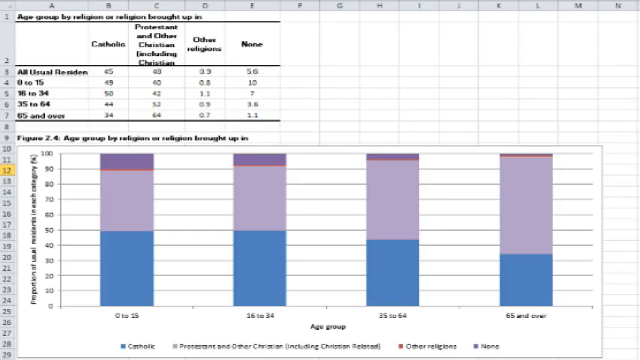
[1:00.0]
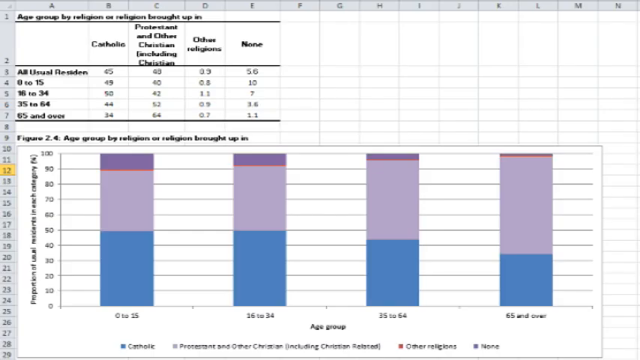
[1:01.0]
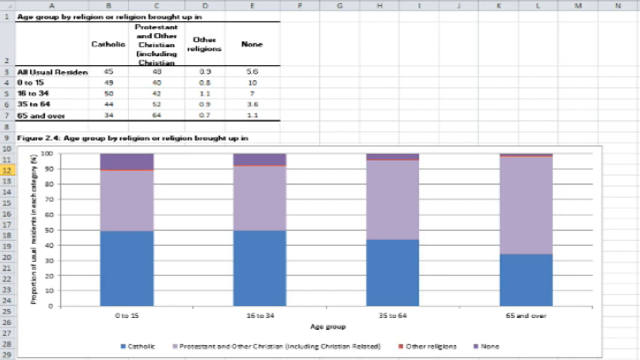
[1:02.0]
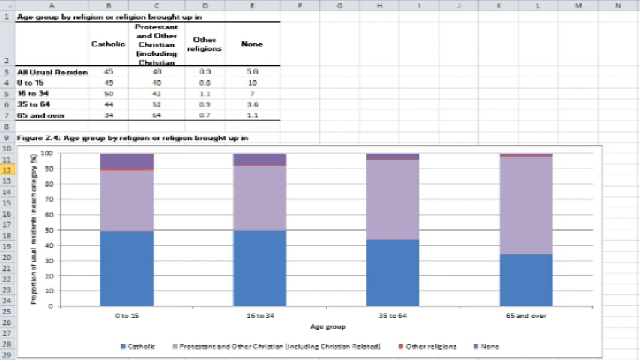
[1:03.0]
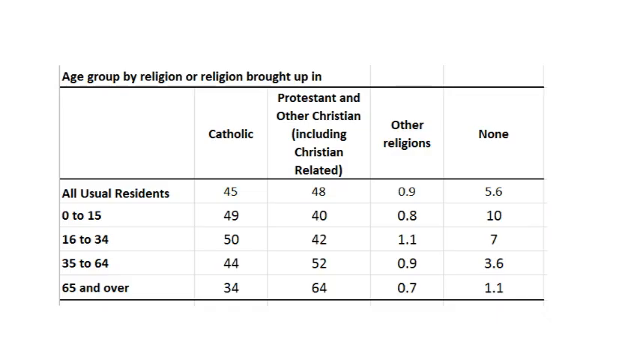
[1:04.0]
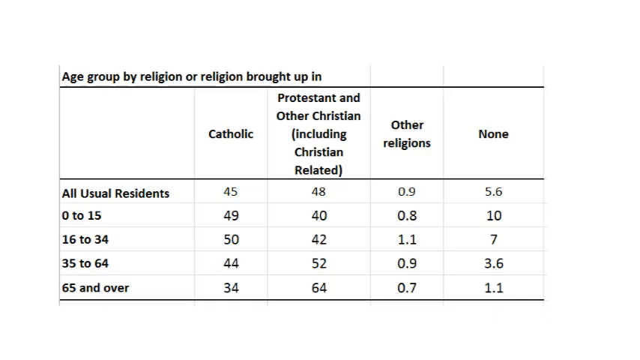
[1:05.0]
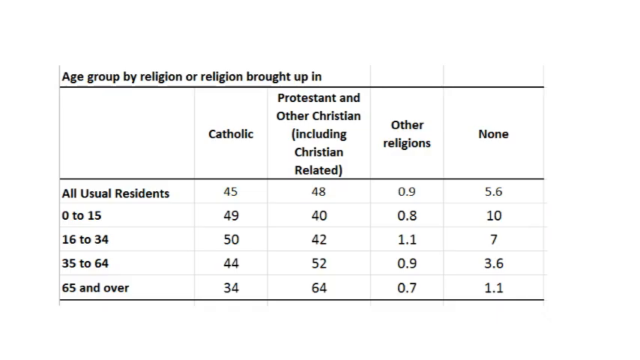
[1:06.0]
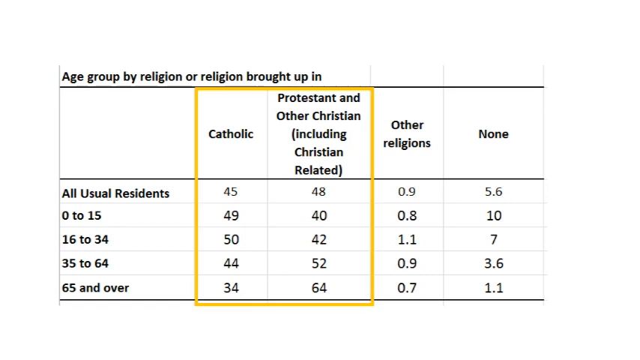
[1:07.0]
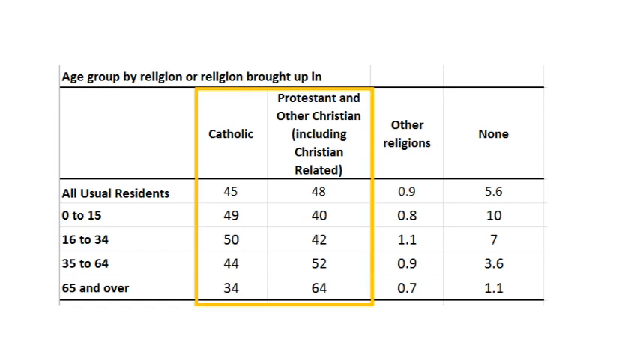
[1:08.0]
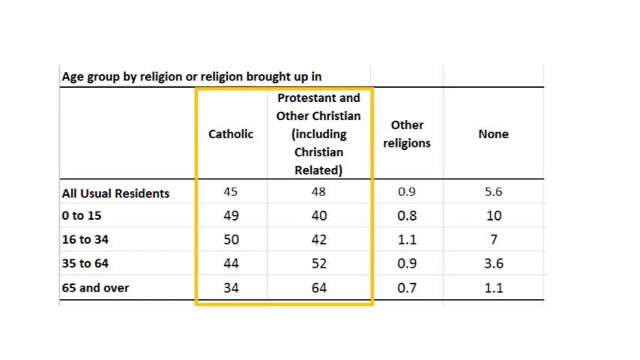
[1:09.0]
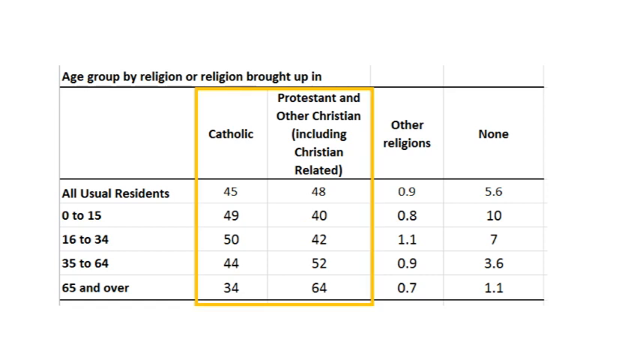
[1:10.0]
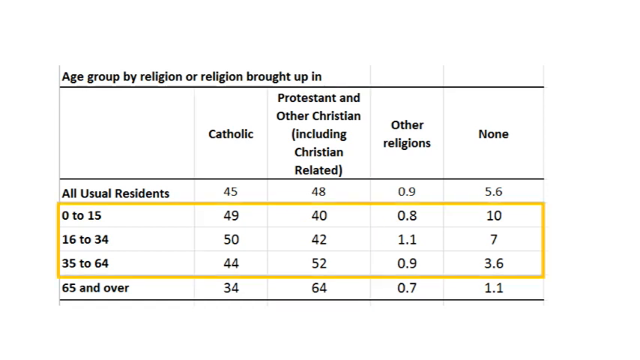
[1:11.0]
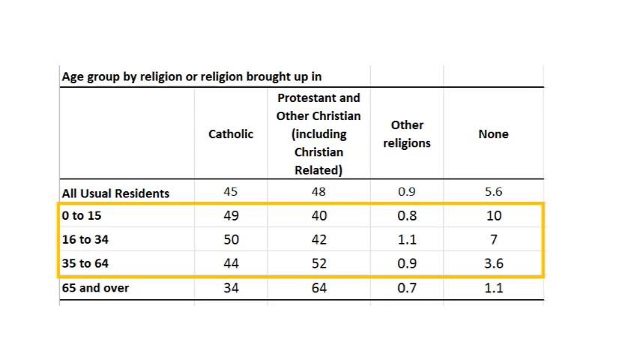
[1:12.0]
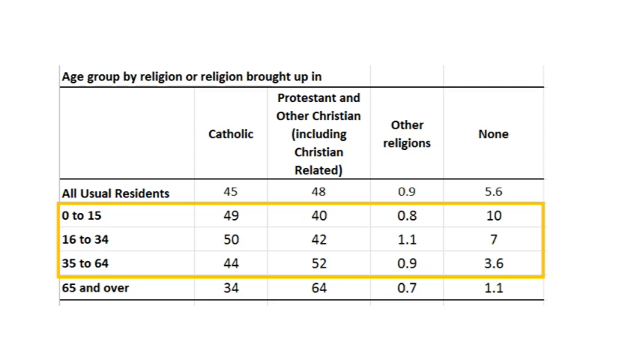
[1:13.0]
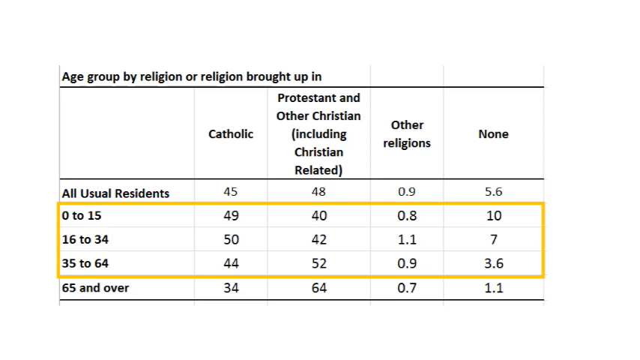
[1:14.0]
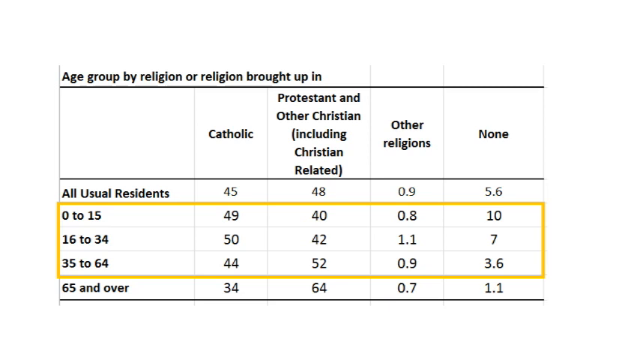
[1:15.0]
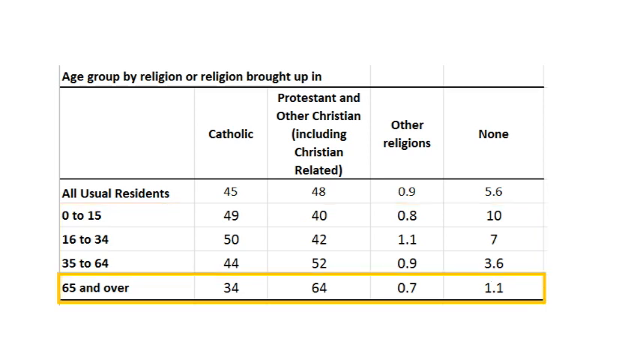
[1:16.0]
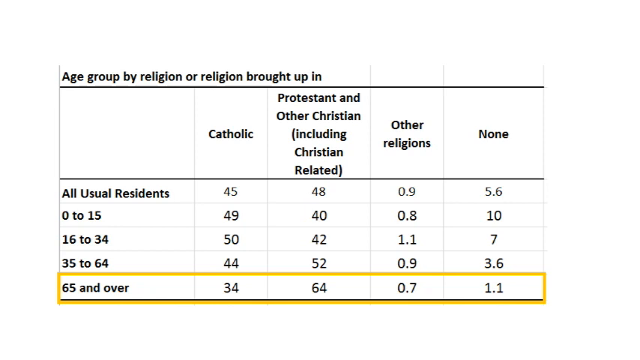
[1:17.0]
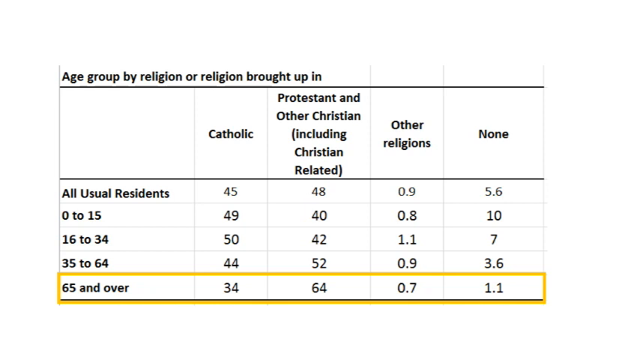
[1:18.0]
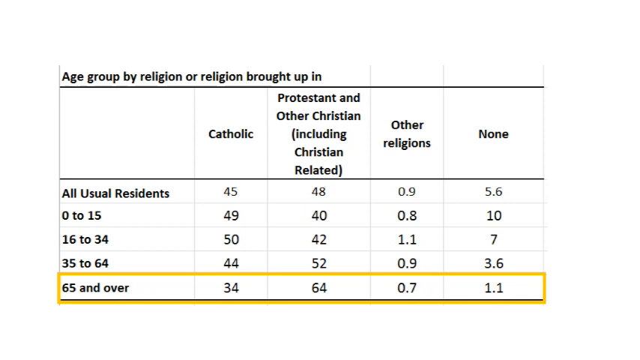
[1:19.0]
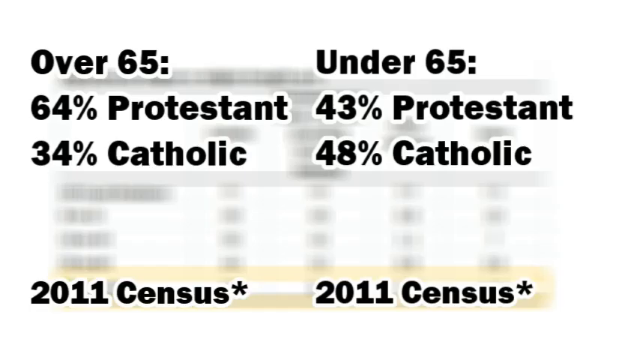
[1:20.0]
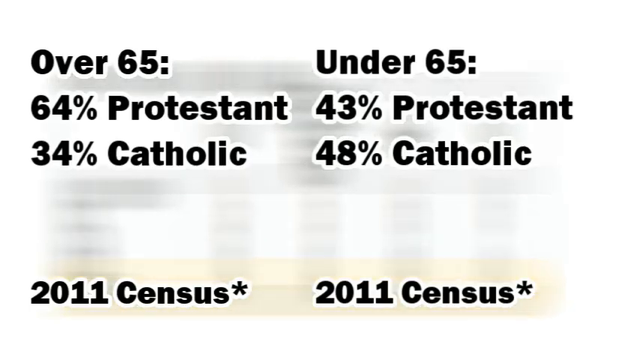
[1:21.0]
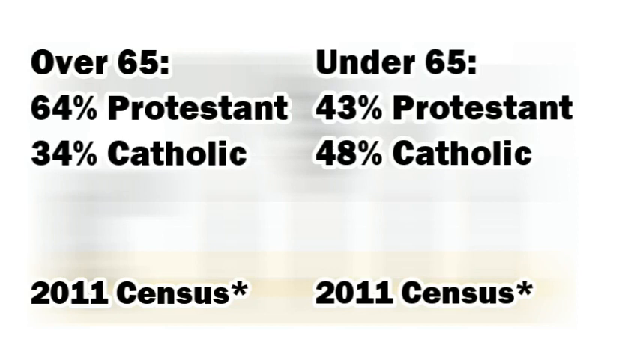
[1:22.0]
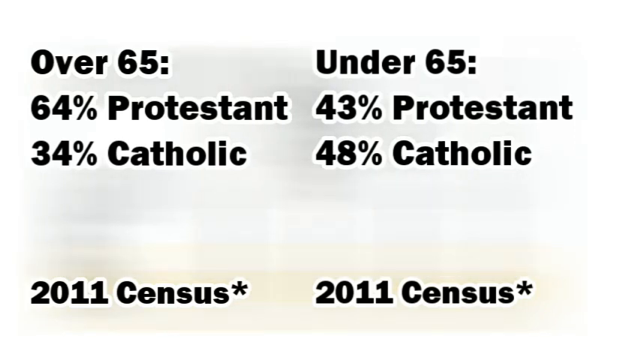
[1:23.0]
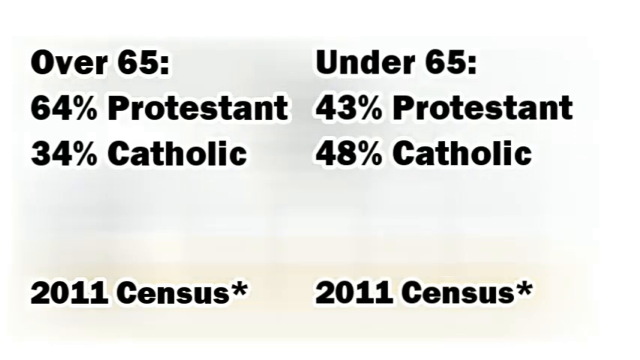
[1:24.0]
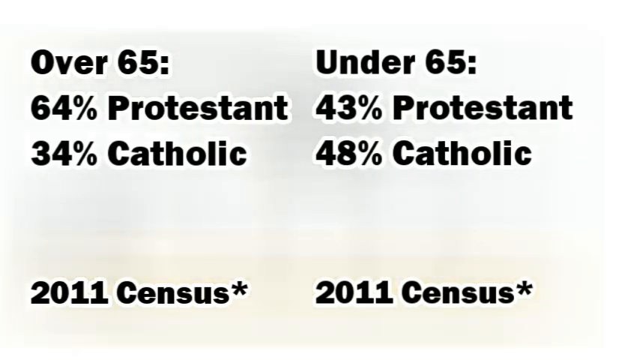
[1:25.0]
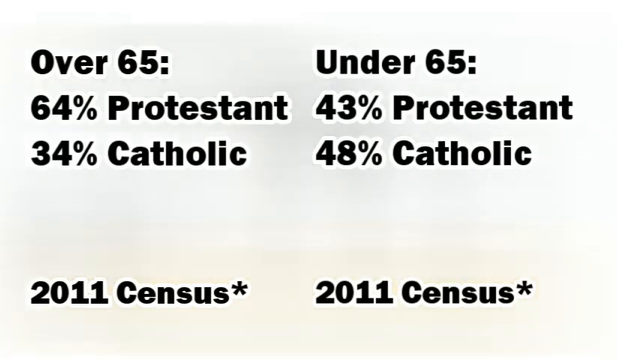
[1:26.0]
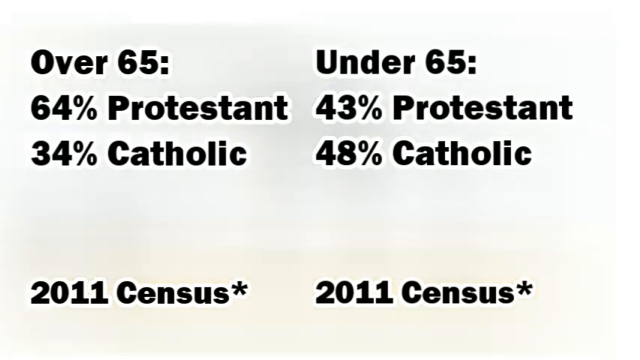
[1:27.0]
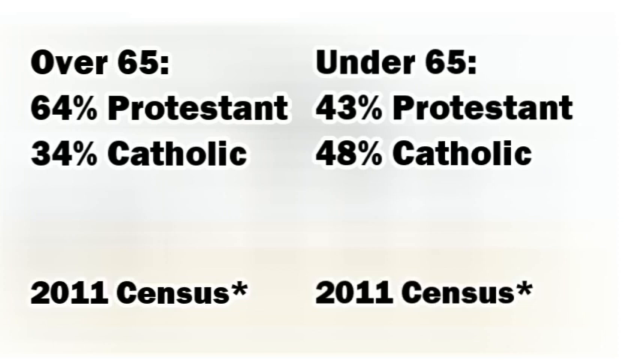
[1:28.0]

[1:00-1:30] A series of still screens of statistics appears, covering religion, ages and residents, Catholic and Protestant, with ages of people and percentages from a 2011 census. A yellow box comes on and goes off the screen, kind of highlighting different stats on the image. On some of the pages the graphs are rectangular, with a light blue bottom, then purple, then dark purple with a thin red line; there are four of these on one page, with dashes going up alongside different numbers. Age groups are listed in a table like an Excel sheet. One page, about age group by religion or religion brought up in, is a black-and-white Excel table with columns for Catholic, other religions and none, filled with numbers.